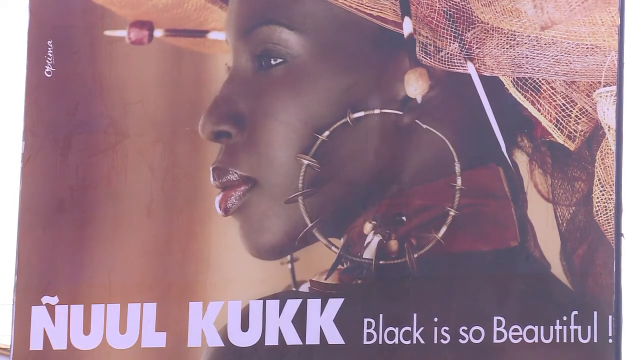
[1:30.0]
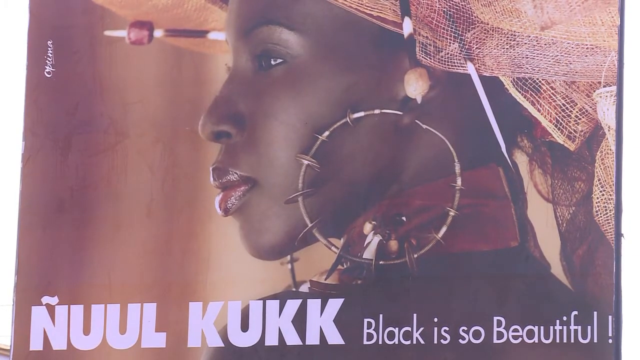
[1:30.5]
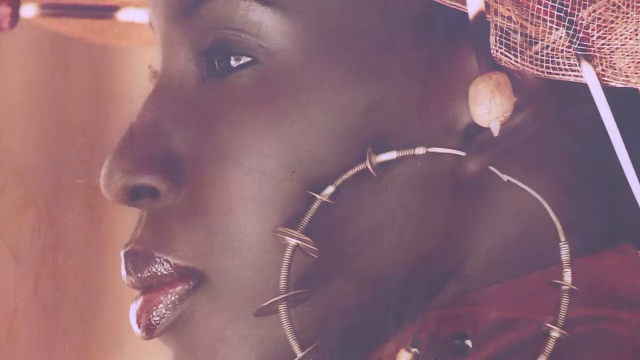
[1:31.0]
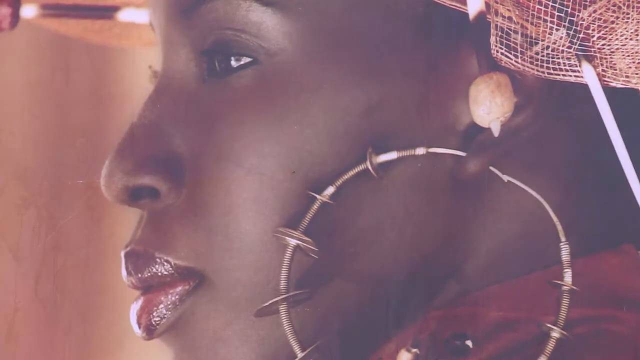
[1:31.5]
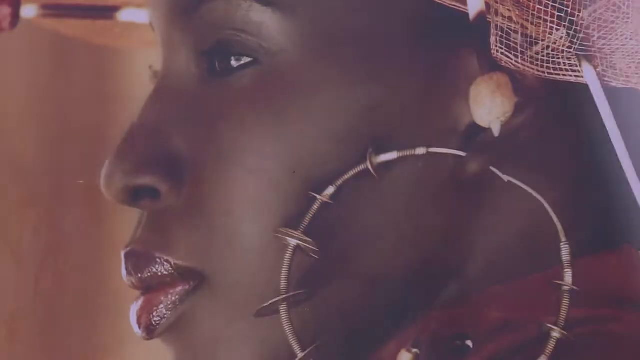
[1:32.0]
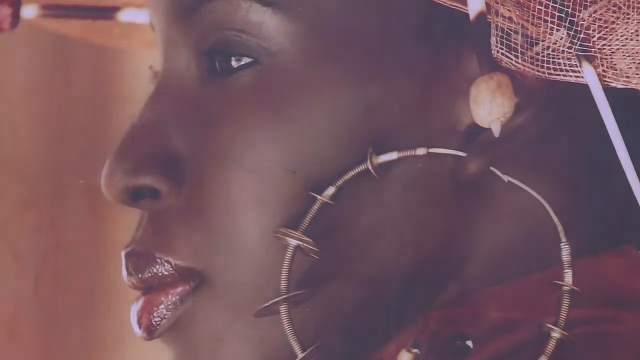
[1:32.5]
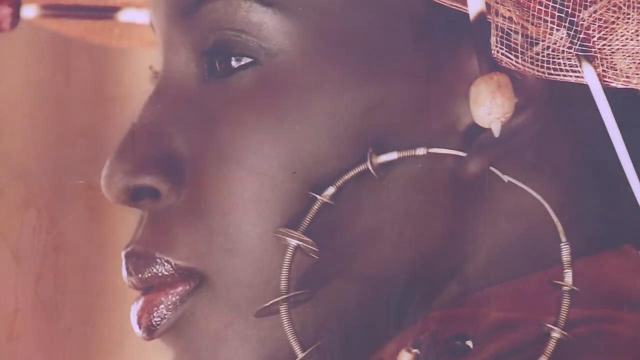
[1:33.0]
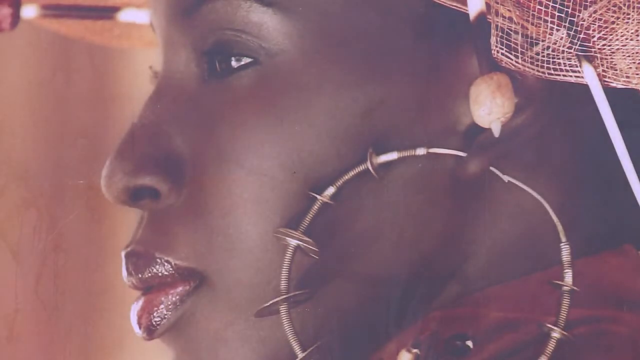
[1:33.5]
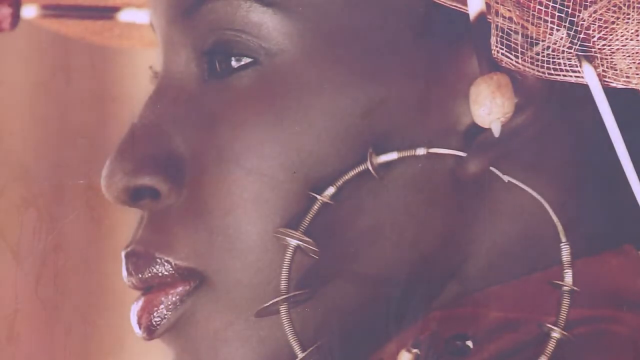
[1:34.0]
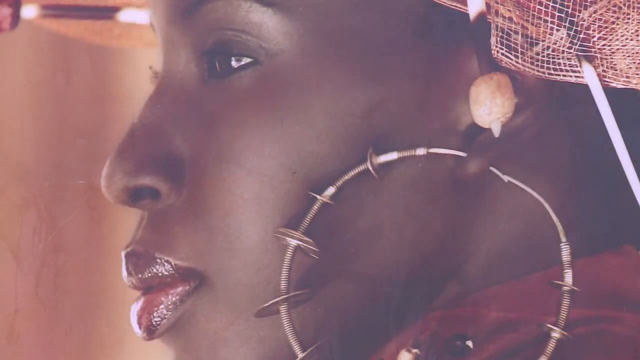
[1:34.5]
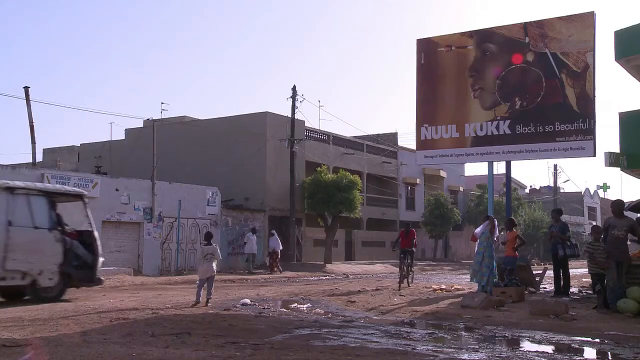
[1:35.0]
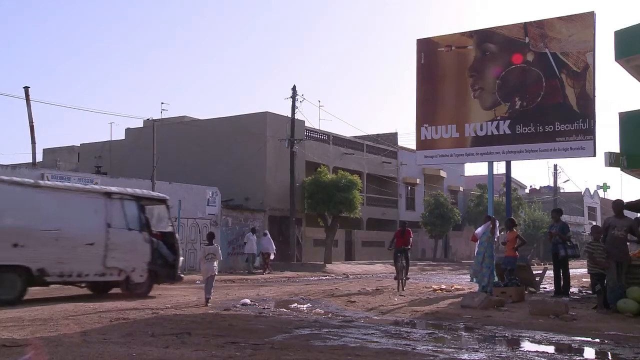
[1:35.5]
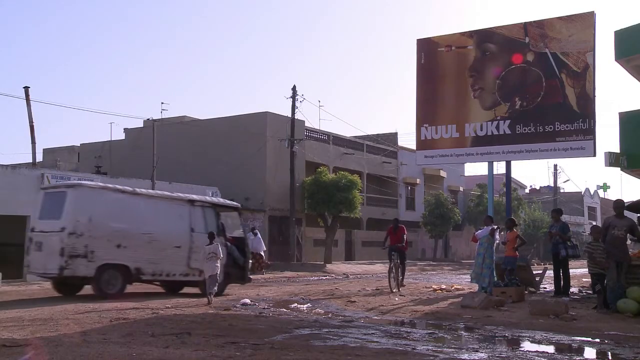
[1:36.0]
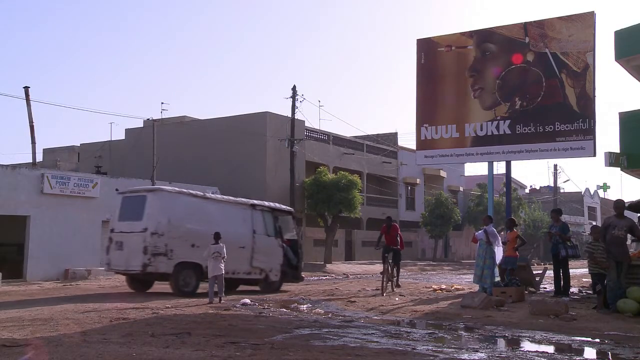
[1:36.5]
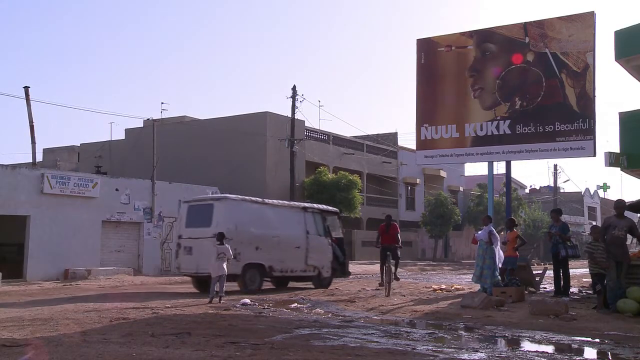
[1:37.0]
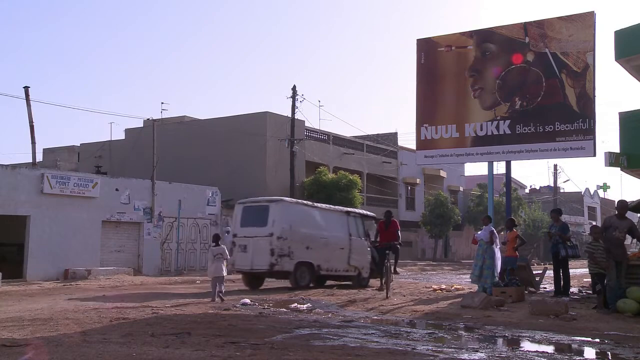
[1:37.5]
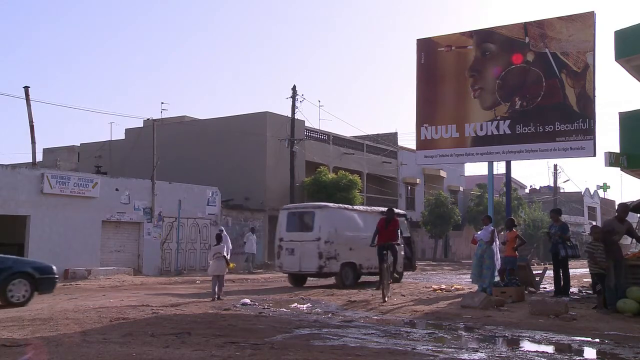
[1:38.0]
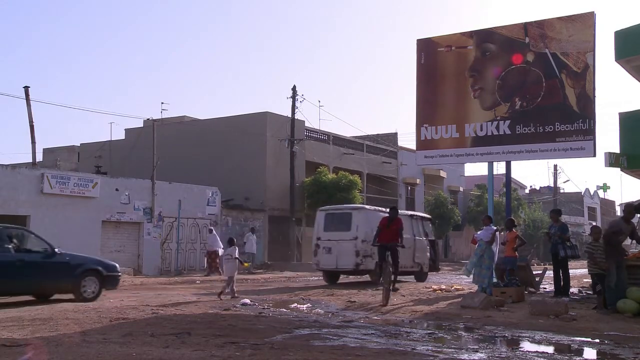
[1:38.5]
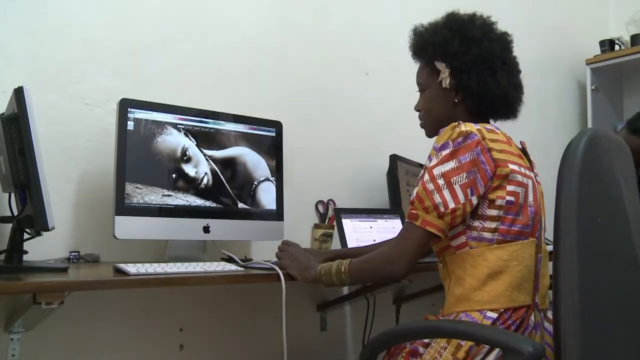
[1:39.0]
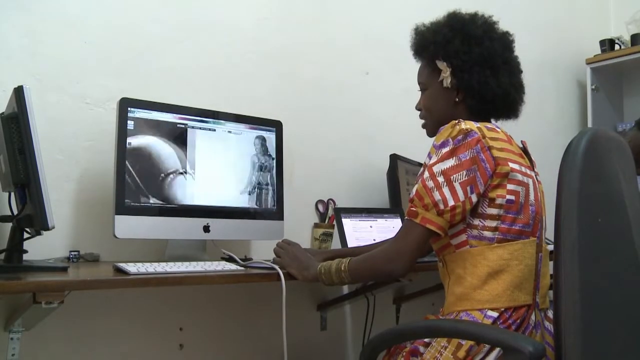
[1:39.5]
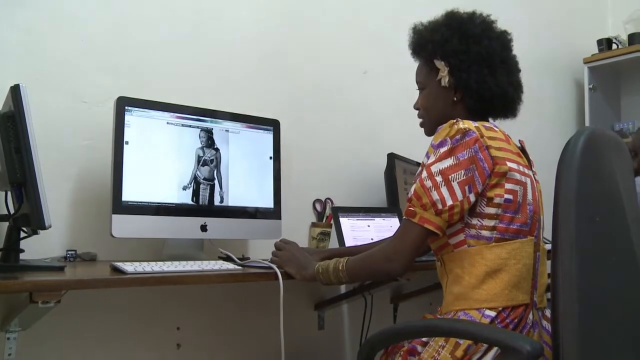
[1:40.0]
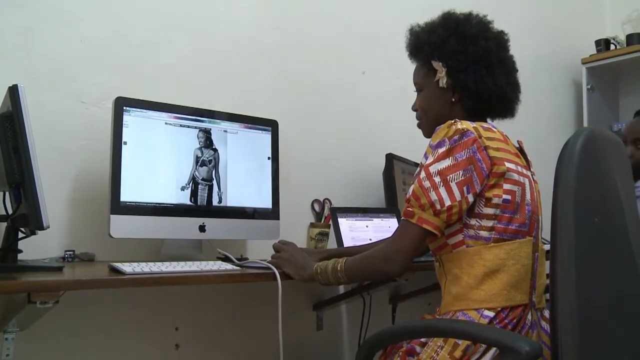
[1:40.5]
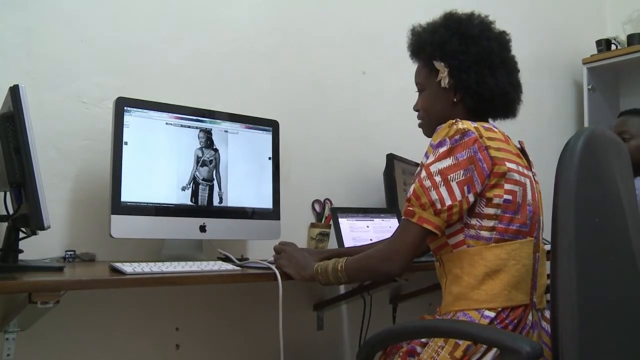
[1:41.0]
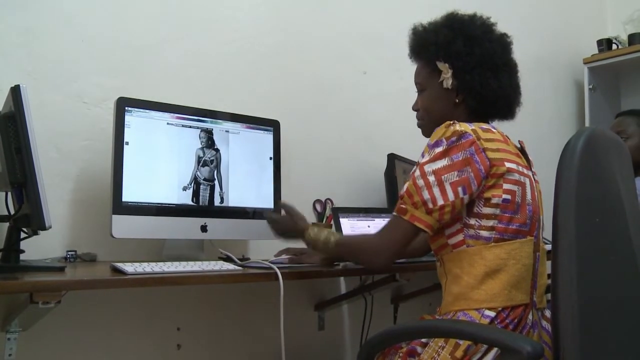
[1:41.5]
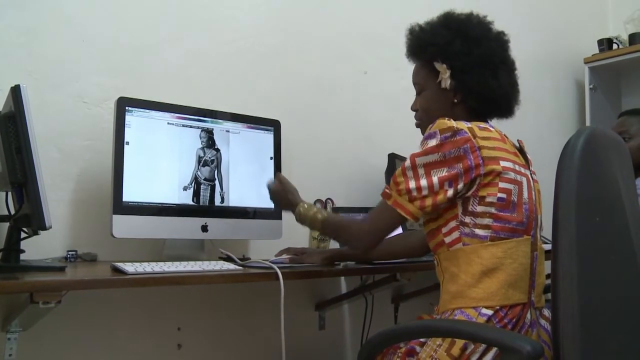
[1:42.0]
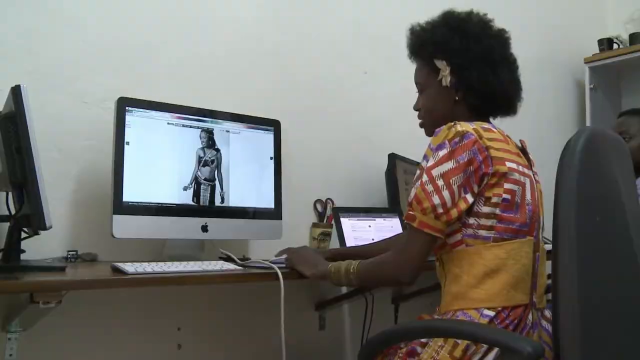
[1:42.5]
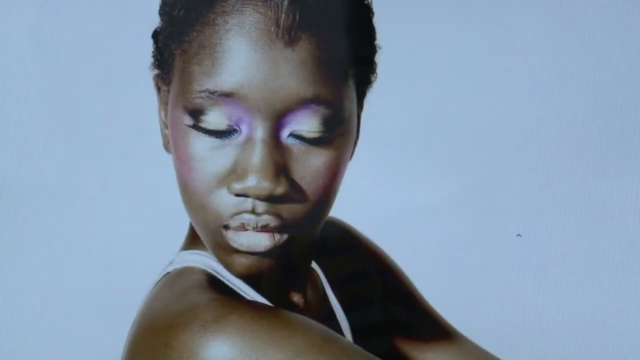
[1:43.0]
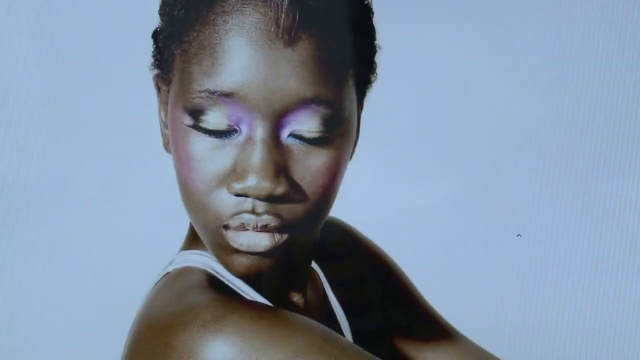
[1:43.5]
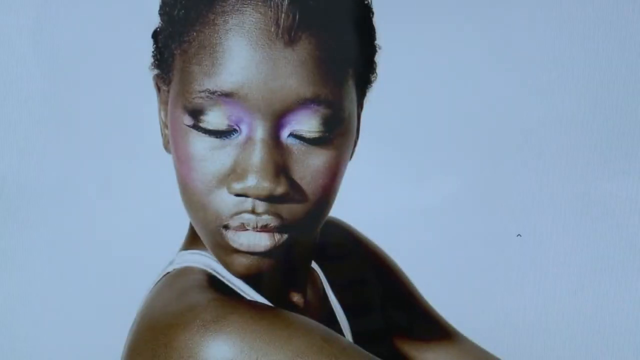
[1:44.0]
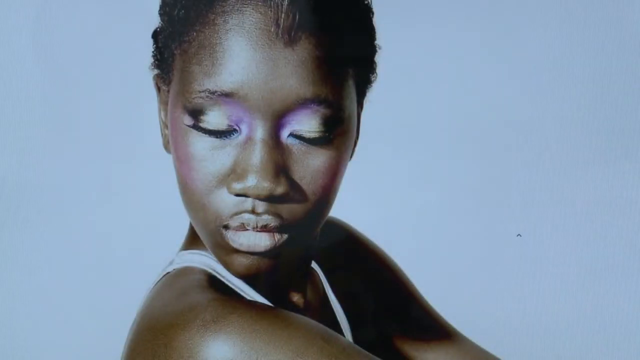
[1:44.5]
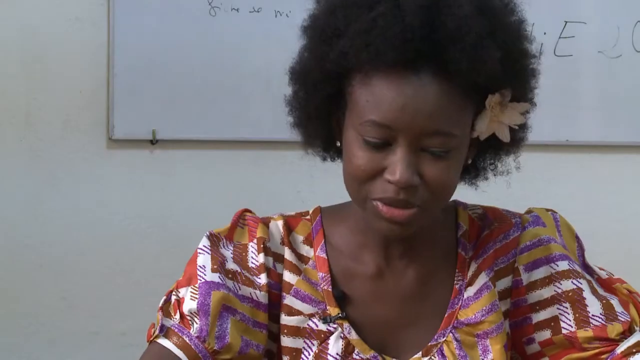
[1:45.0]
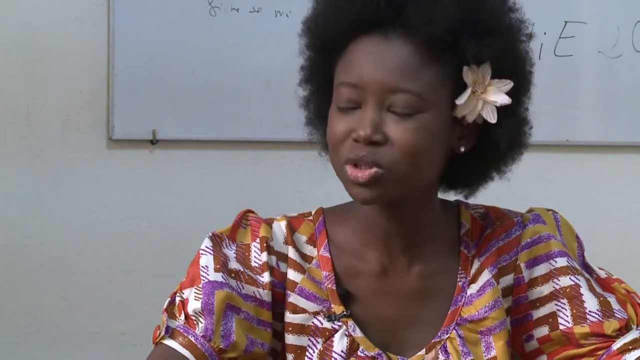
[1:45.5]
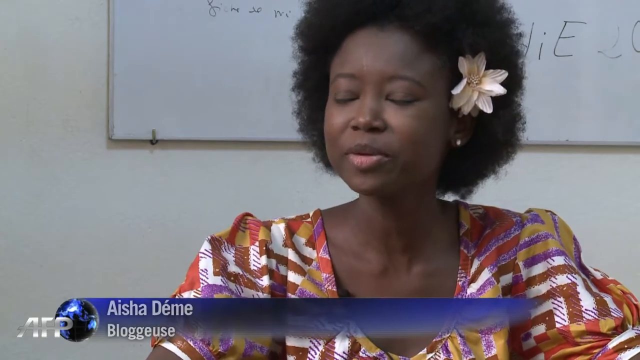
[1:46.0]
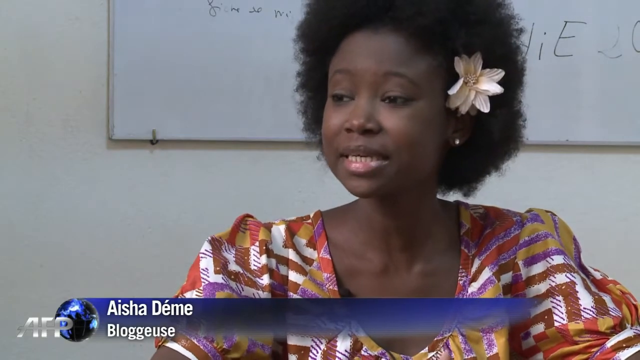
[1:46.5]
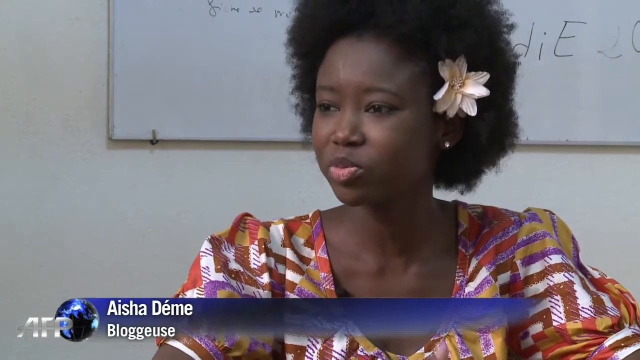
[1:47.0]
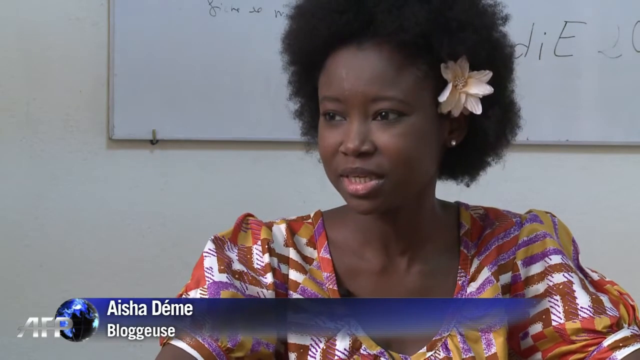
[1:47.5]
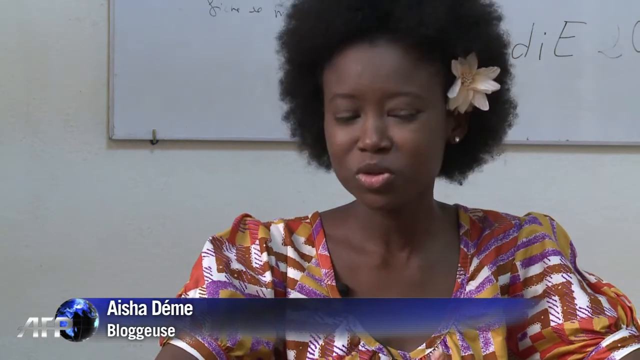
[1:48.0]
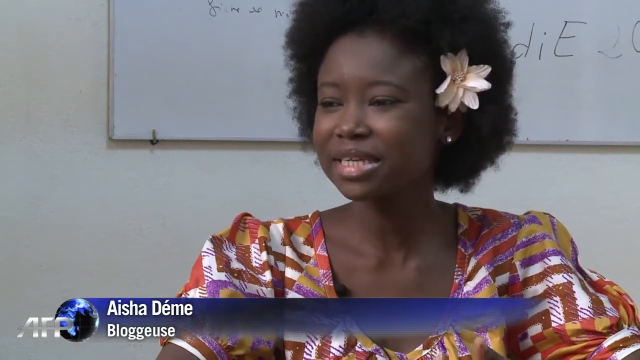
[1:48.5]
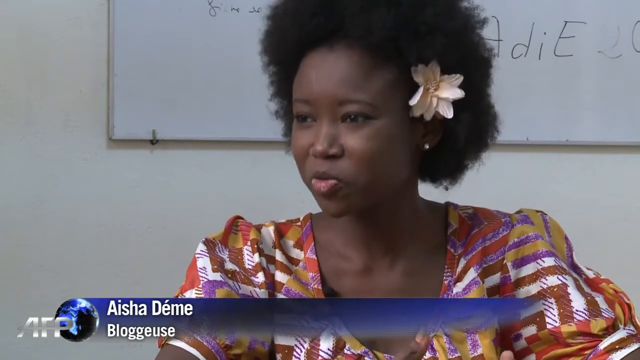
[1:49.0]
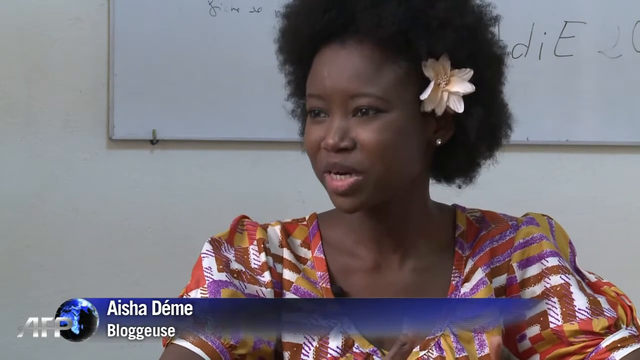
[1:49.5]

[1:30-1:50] A photograph shows a woman with something round and tan in her ear and a huge hoop earring in her left ear. It is an advertisement for her on a billboard located in a very poor neighborhood. A decrepit van goes down the street with its door open. People are on the street, walking back and forth, and what looks like a child walks near the street. Then a very well-dressed Black woman looks at a computer monitor, scrolling through various garments, and puts her hand up to the screen. A Black woman with beautiful makeup, very light lips and short hair is Aisha, a blogger, Demi; she shows different things on her website.